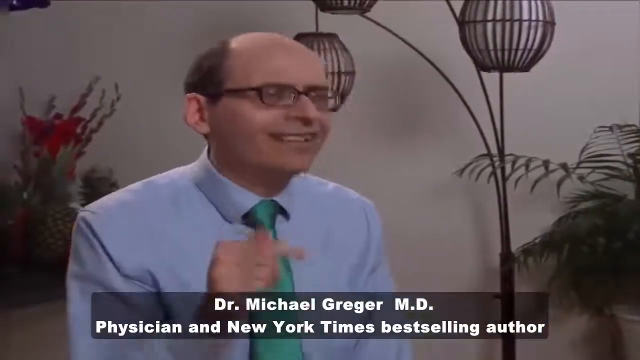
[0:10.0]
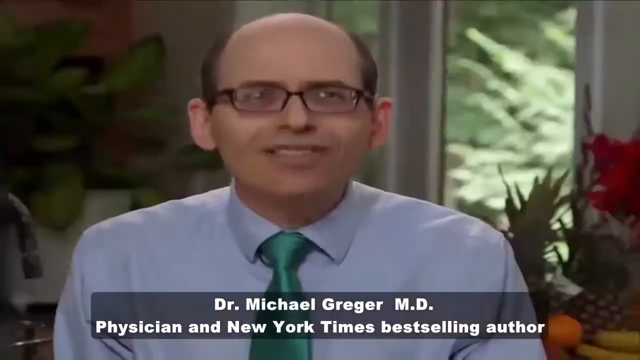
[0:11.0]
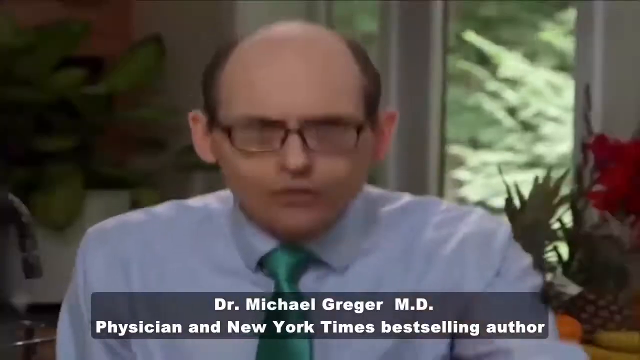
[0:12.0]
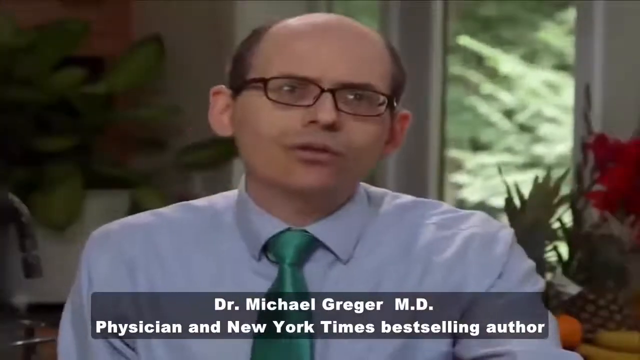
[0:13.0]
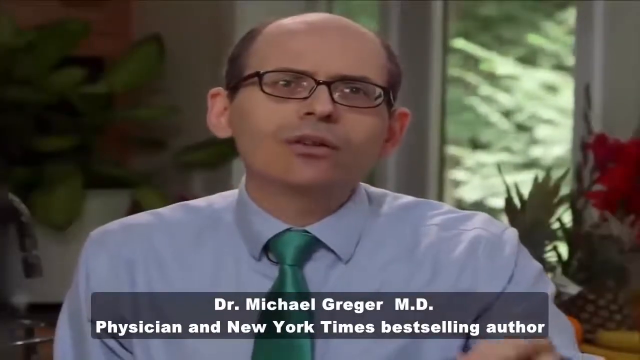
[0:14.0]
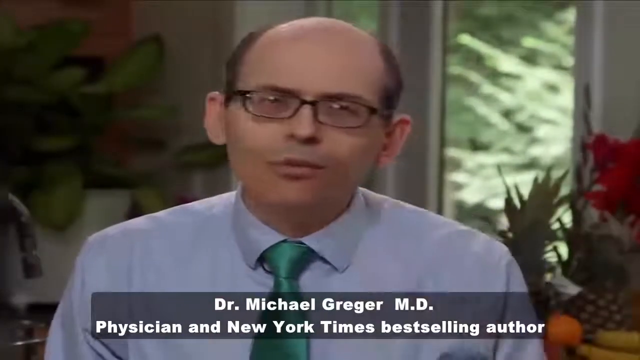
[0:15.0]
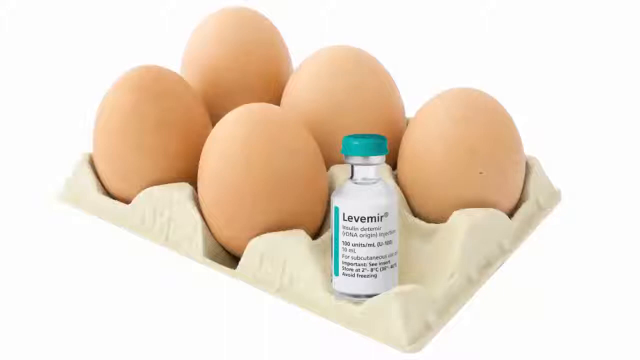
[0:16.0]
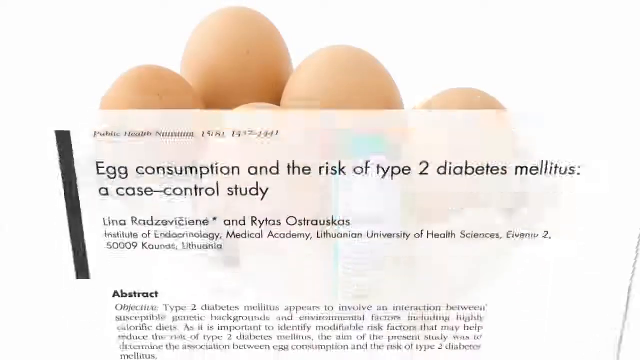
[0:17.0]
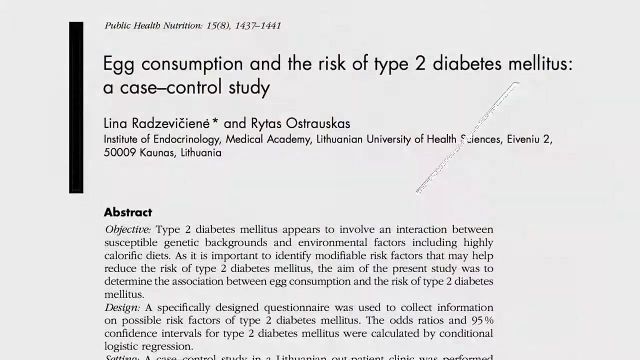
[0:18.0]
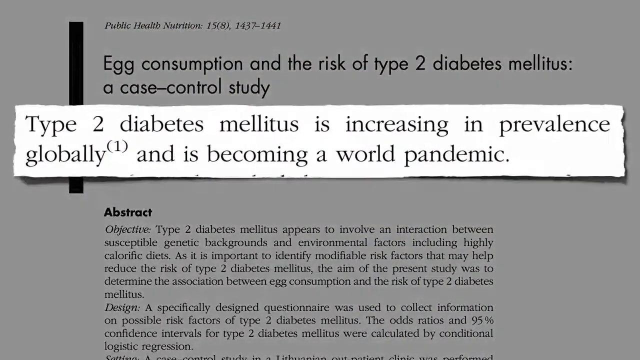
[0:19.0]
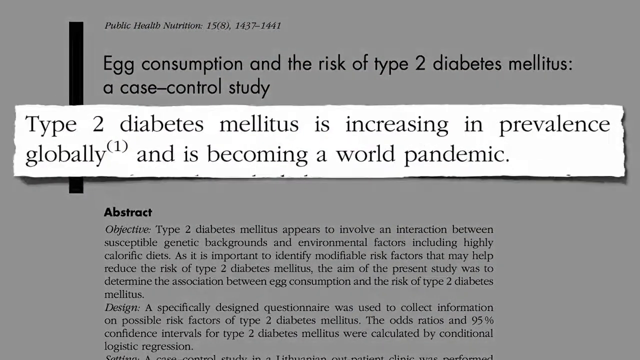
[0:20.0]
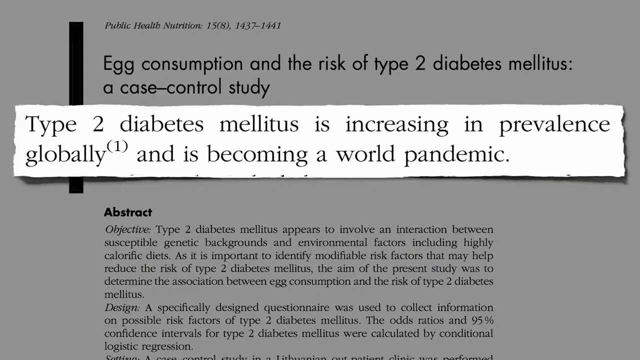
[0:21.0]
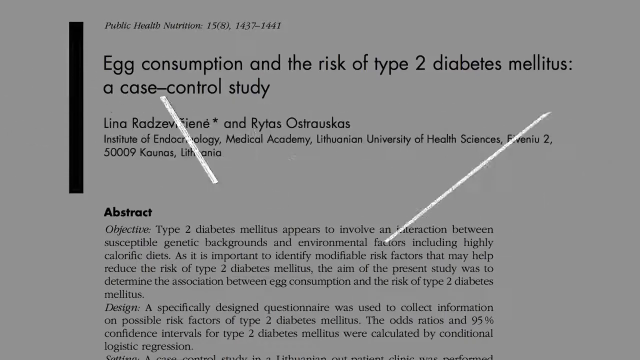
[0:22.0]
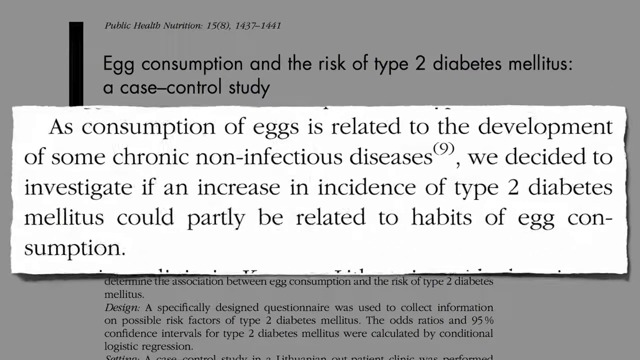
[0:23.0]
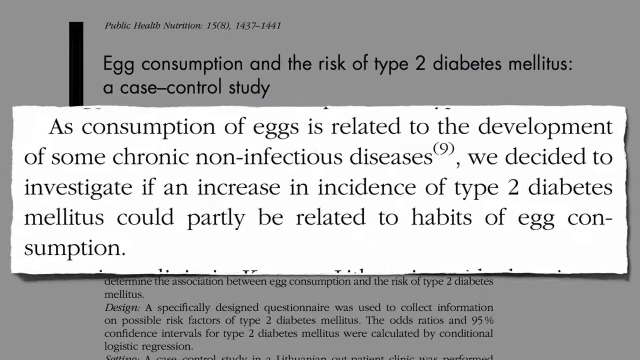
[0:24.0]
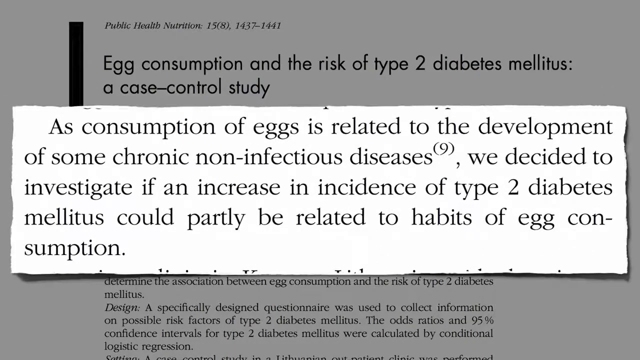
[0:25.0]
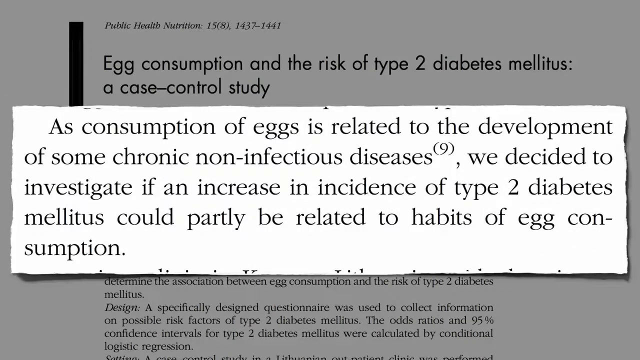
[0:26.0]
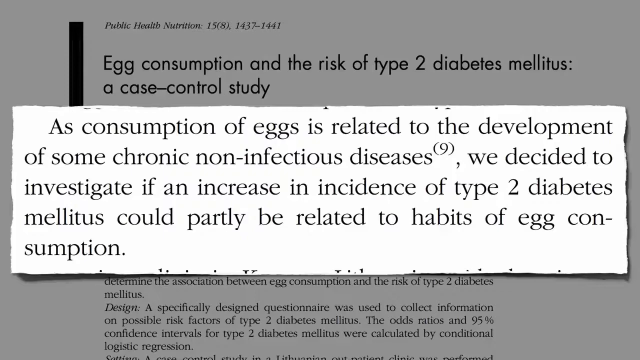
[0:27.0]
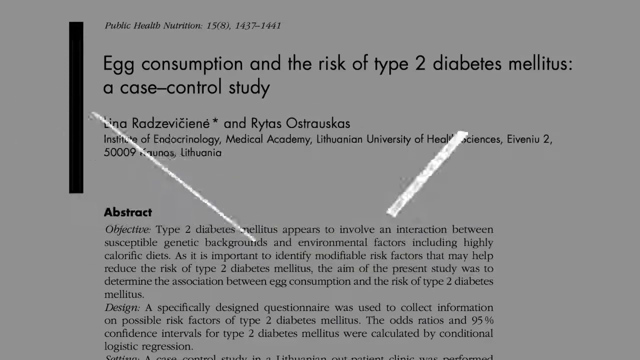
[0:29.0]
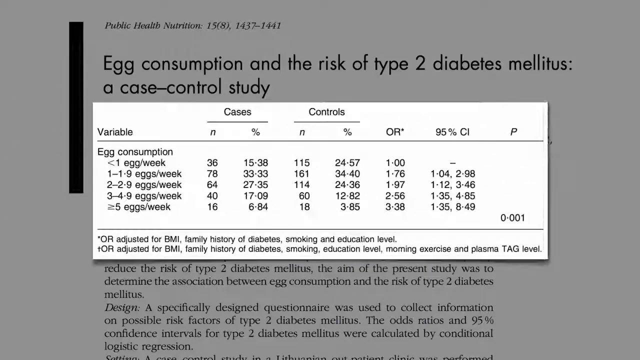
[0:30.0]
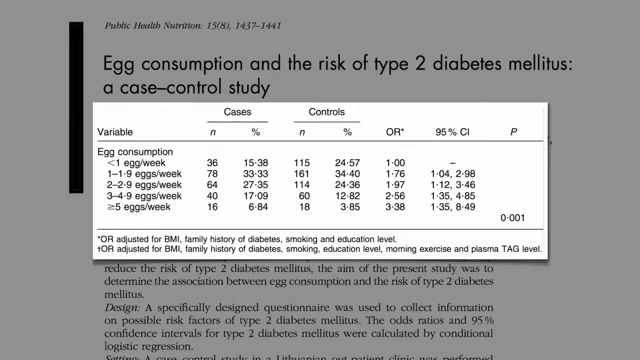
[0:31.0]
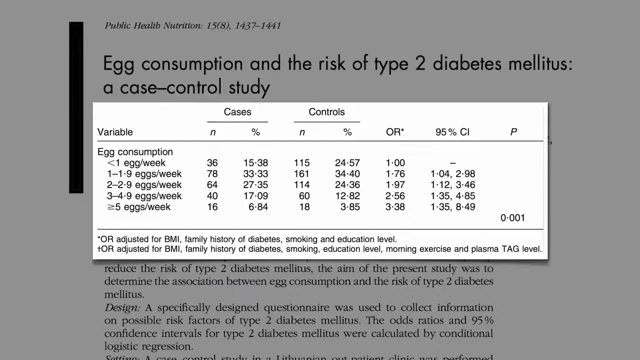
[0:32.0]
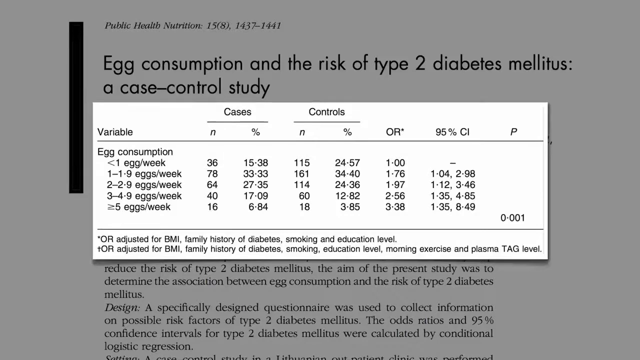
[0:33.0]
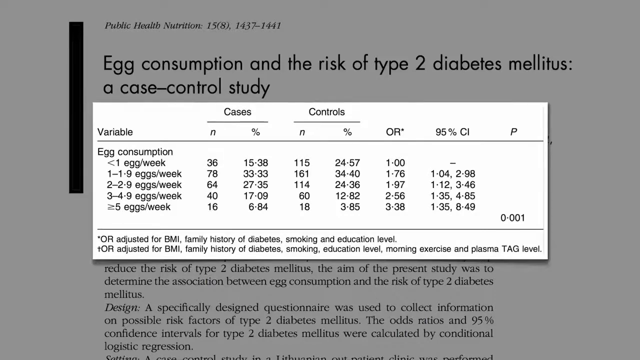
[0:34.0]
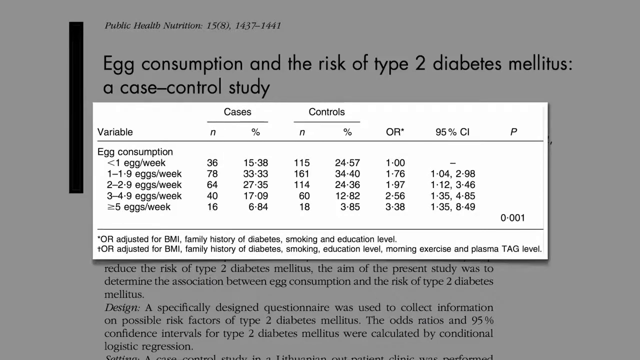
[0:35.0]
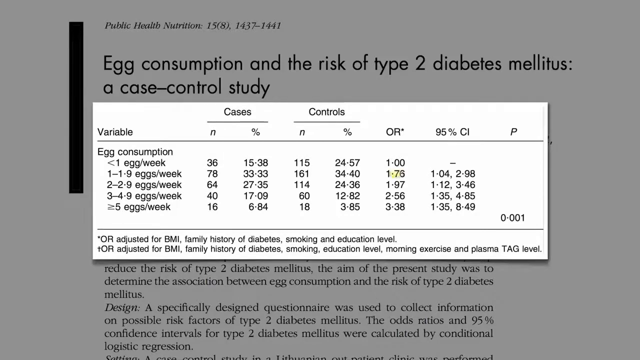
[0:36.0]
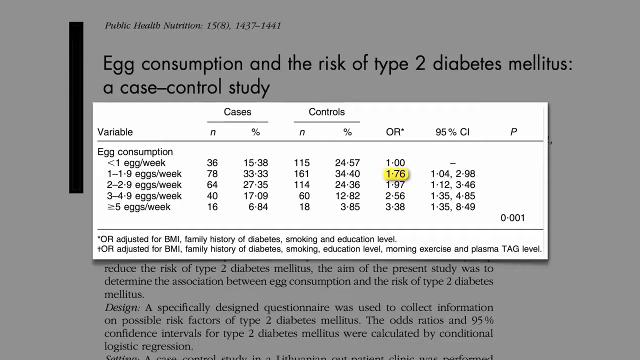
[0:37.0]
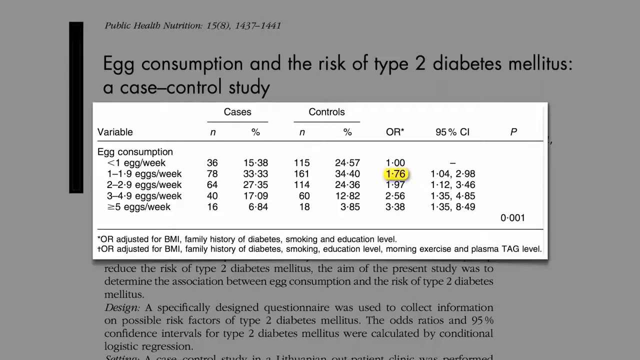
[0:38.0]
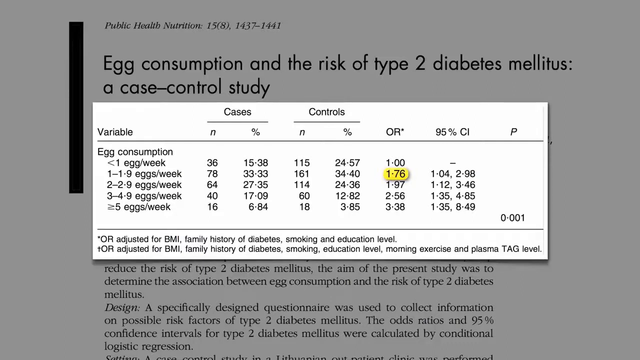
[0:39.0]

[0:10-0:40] The man points downward with his right hand, and the view changes to a very close-up direct front view of him talking. His left hand rises and goes back down as he talks, briefly revealing a black watch on his left wrist; he continues talking, and his left hand rises and falls again. The scene changes to five eggs on a small crate, with a very small prescription bottle of liquid medication called Levemir, with a teal cap, in the sixth space. A news article appears with the title "Egg Consumption and the Risk of Type 2 Diabetes mellitus, a Case Control Study." A section of the article appears in front, reading "Type 2 diabetes, mellitus, is increasing in prevalence globally and is becoming a world pandemic." It disappears and another section appears, reading "As consumption of eggs is related to the development of some chronic non-infectious diseases, we decided to investigate if an increase in incidence of type 2 diabetes mellitus could partially be related to habits of egg consumption." That section disappears, and what looks like a chart of egg consumptions, cases and controls appears, with a bunch of numbers and variables.